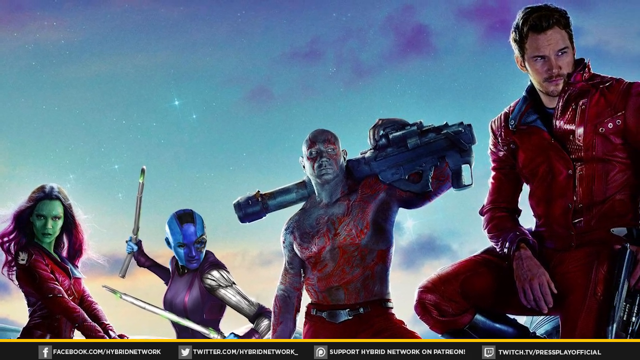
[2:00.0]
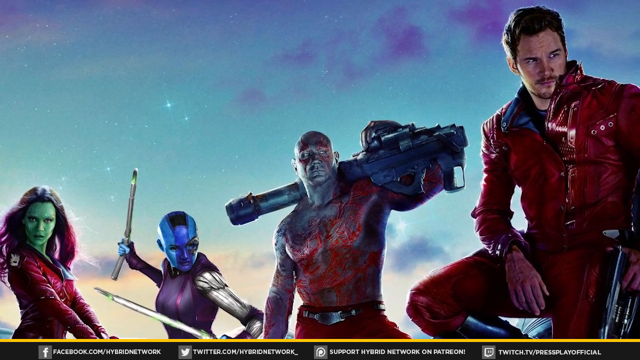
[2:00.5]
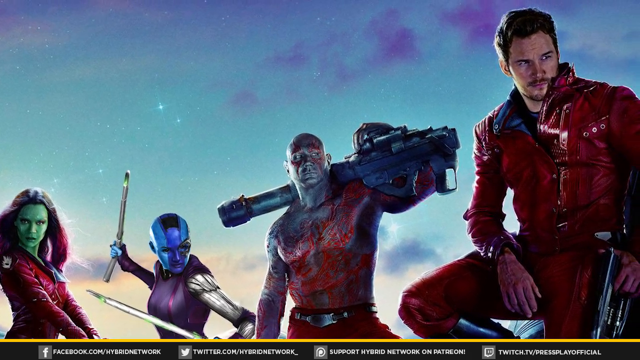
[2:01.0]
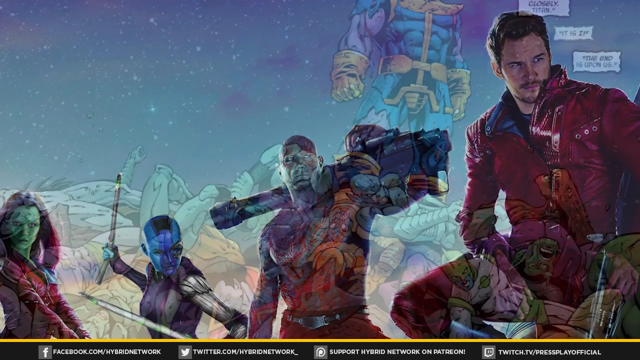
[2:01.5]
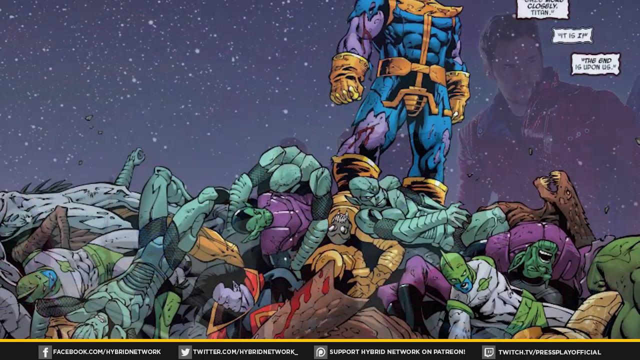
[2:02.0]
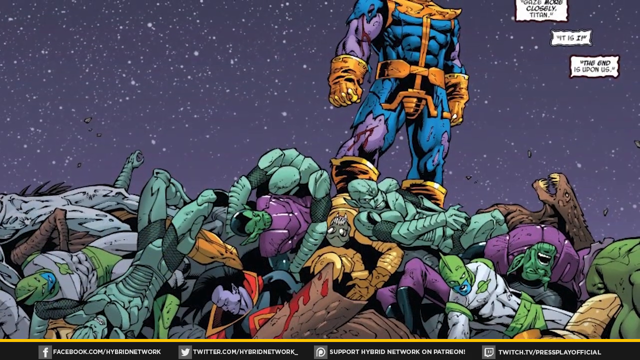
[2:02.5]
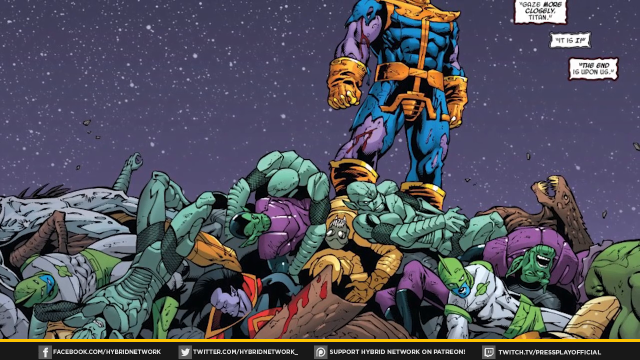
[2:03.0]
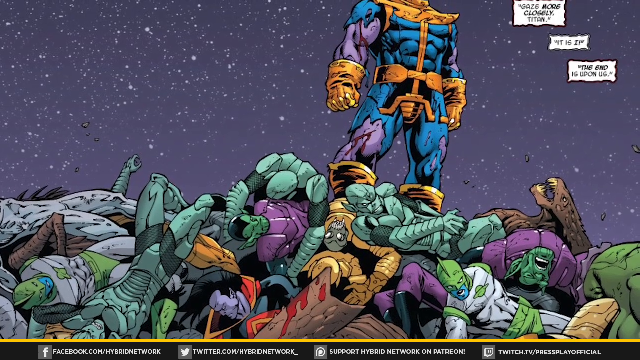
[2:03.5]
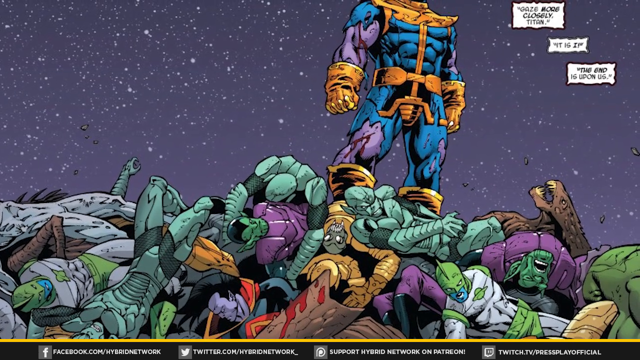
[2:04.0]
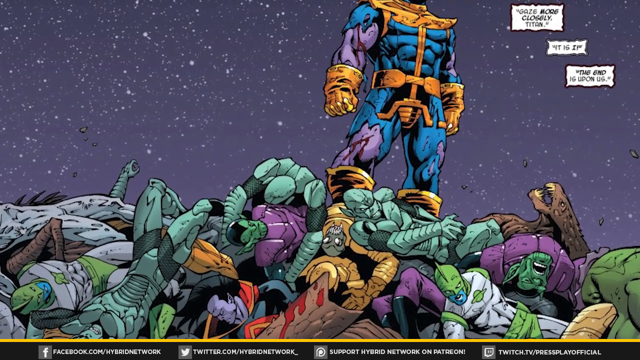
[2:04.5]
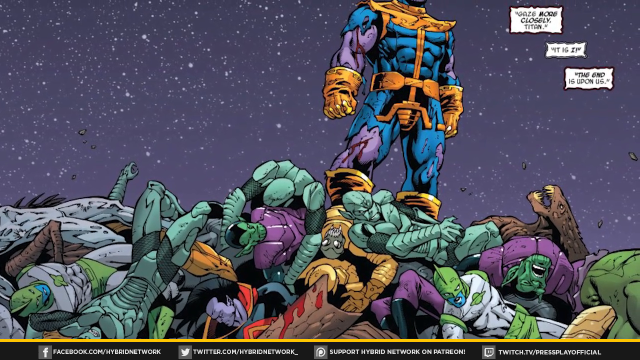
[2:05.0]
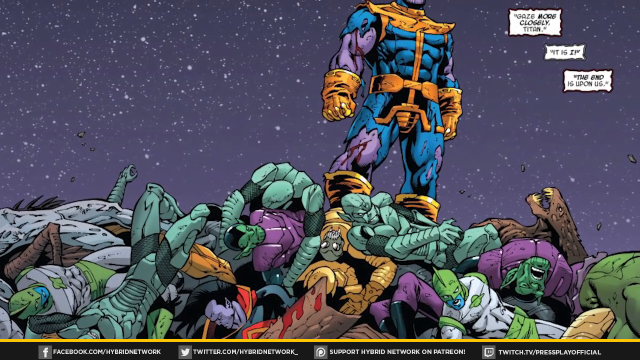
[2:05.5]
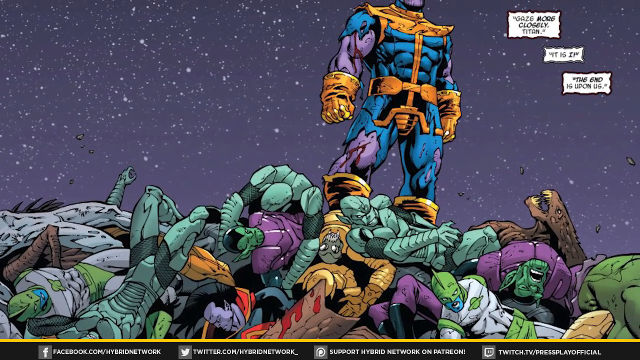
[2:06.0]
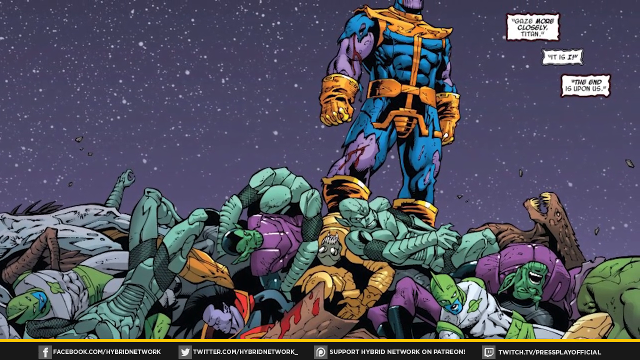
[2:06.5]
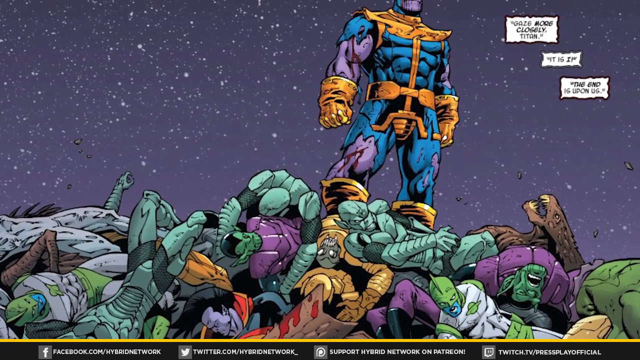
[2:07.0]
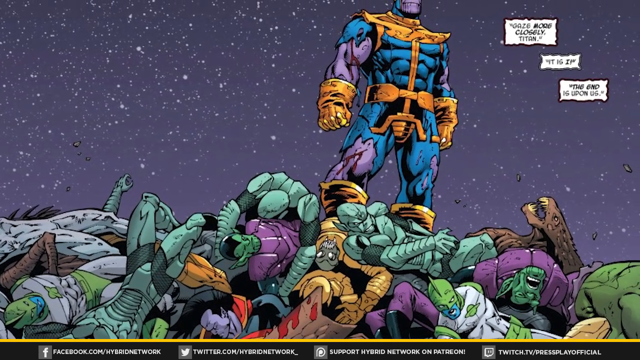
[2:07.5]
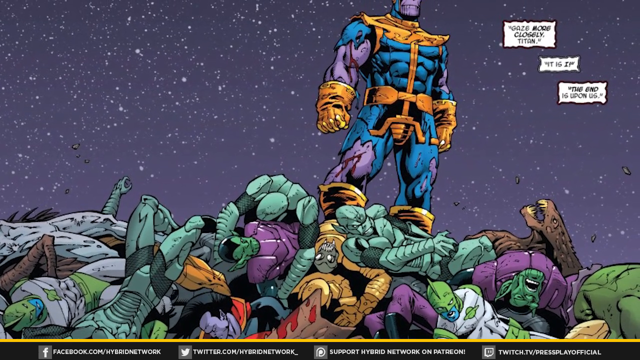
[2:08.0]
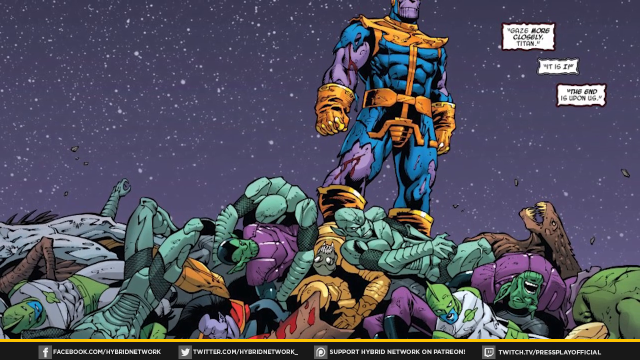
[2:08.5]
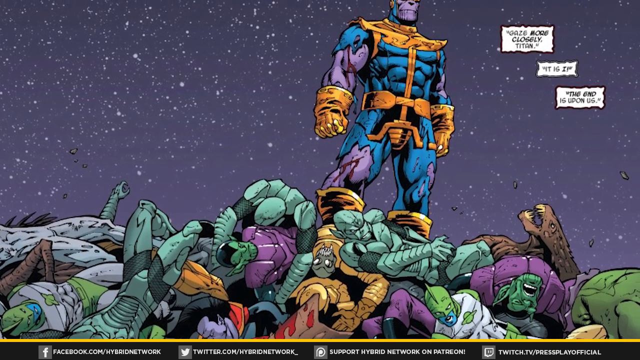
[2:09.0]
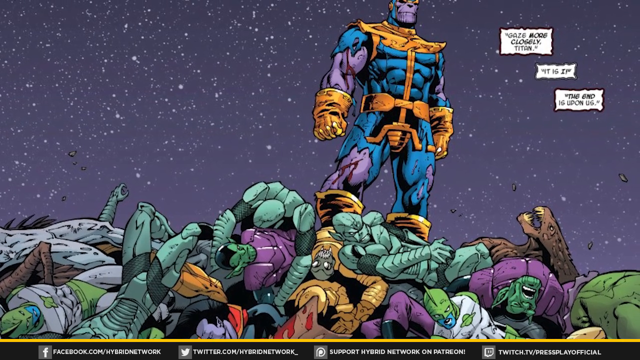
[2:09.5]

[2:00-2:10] The video appears to be about Guardians of the Galaxy. An image shows, toward the left, a green-skinned character with flowing burgundy hair. Next to her is another character who looks female; she is purple and blue and holds two swords. To her right is a muscled character who looks painted in blood or red paint, holding what looks like some sort of very large futuristic weapon over the shoulder. Toward the right is Chris Pratt's character. The sky background is in shades of blue, with some purple clouds and some stars. The camera pans away, and the video moves to what appears to be a comic, possibly also from Guardians of the Galaxy. It shows a pile of what look like dead monster bodies in different colors: some silver, green and blue, some teal ones, a purple one with a green face, a yellow one, and what looks almost like a dead werewolf to the right. A towering figure stands among the bodies, in what looks like a ripped gold and blue suit, with a purple muscular body and gold gloves. Toward the right are three kind of comic-looking boxes with text in them that is too blurry to read. Behind the figure standing on the pile of bodies is a starry sky.